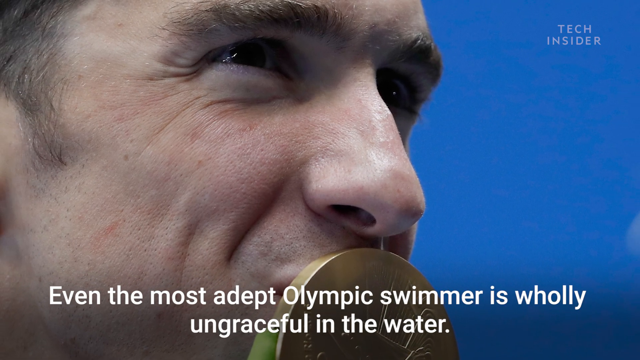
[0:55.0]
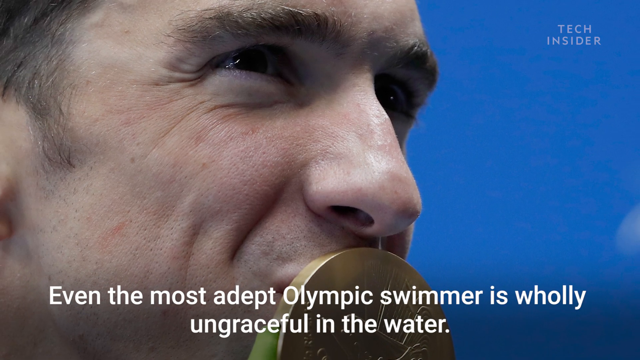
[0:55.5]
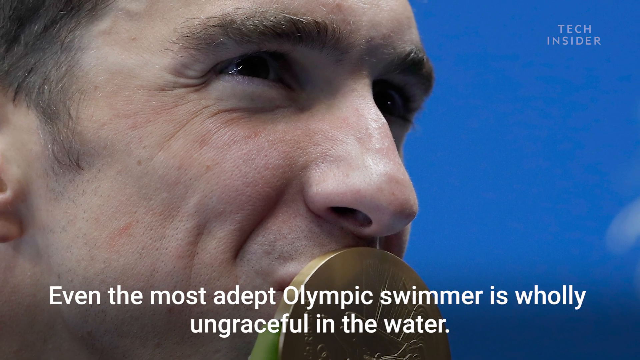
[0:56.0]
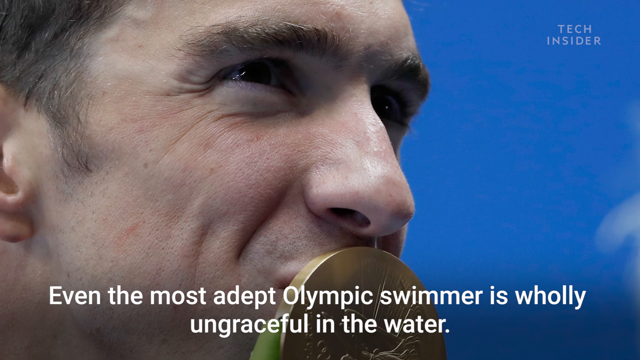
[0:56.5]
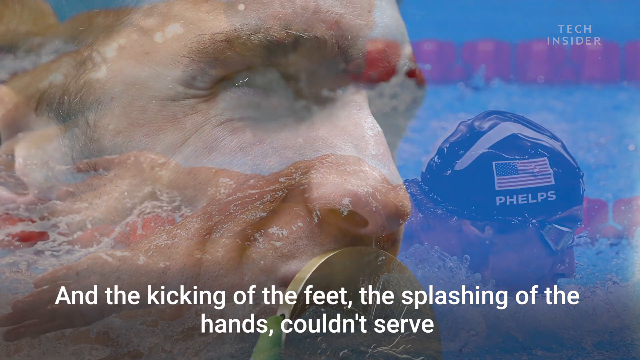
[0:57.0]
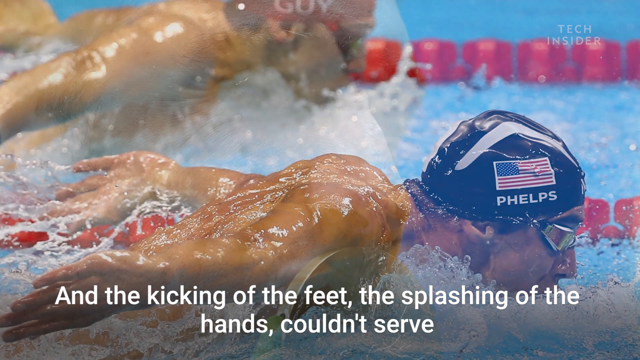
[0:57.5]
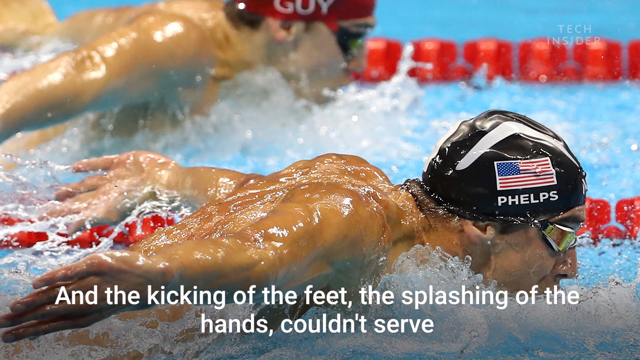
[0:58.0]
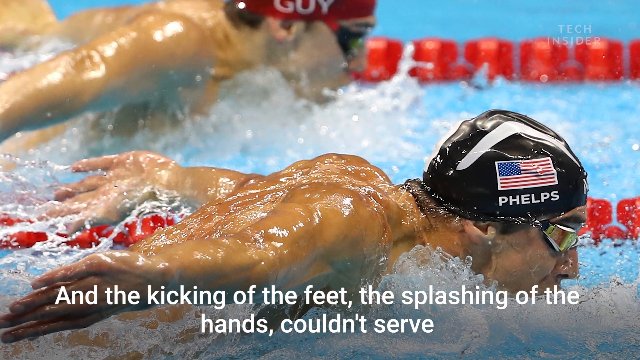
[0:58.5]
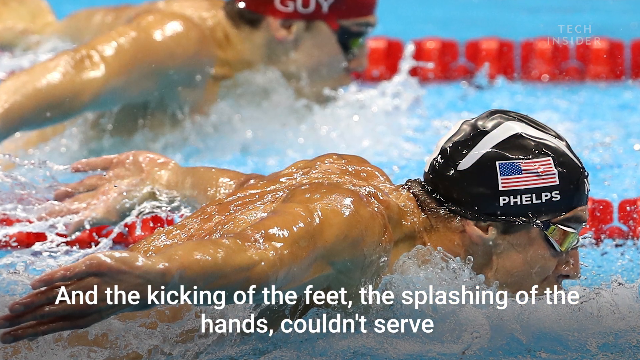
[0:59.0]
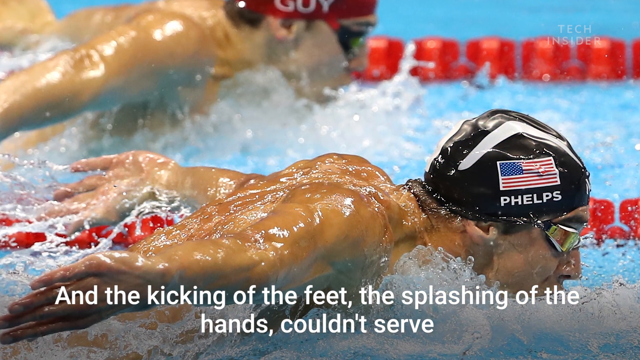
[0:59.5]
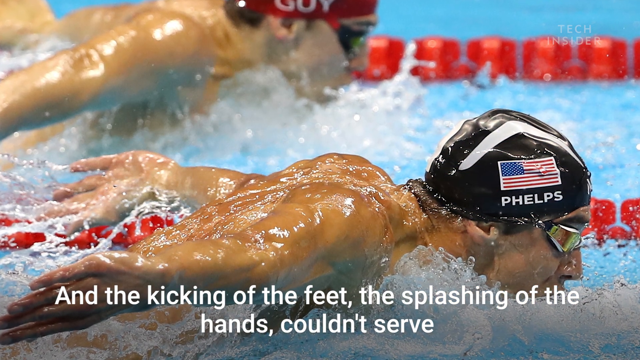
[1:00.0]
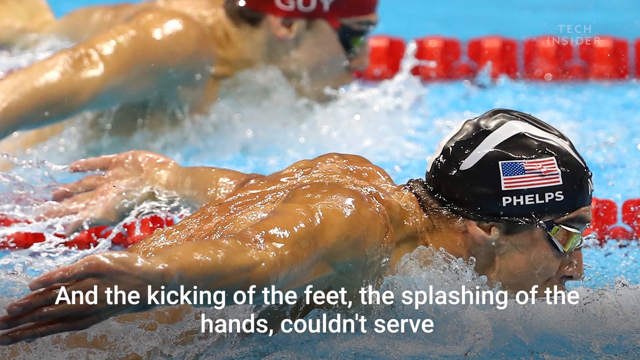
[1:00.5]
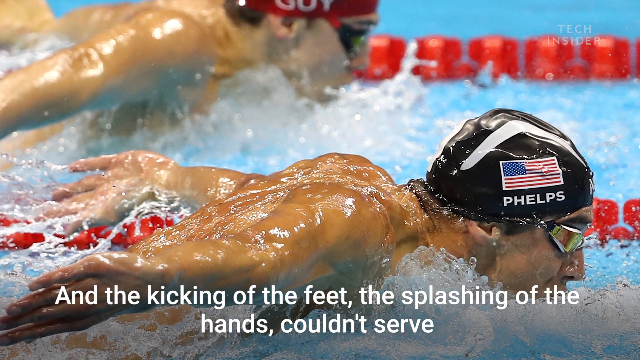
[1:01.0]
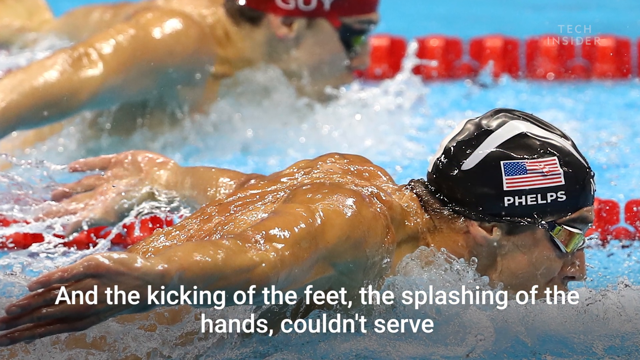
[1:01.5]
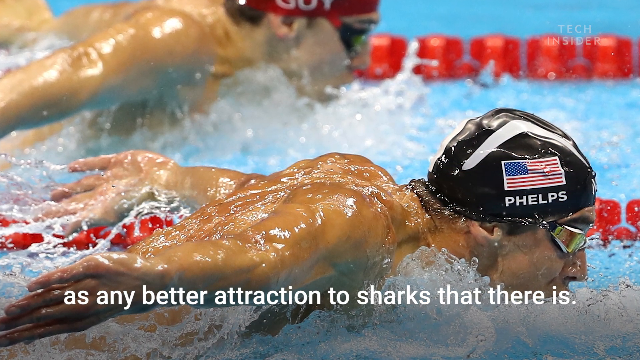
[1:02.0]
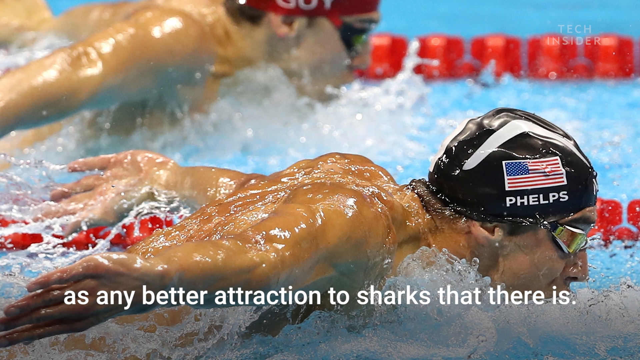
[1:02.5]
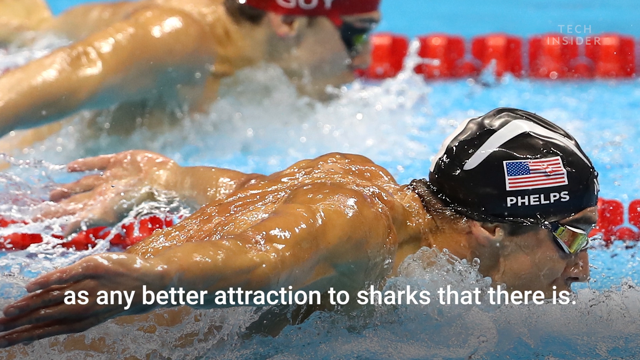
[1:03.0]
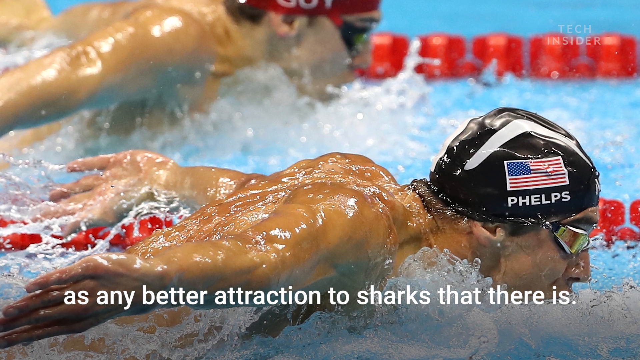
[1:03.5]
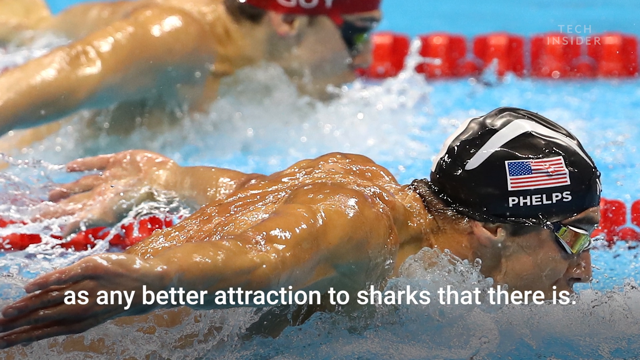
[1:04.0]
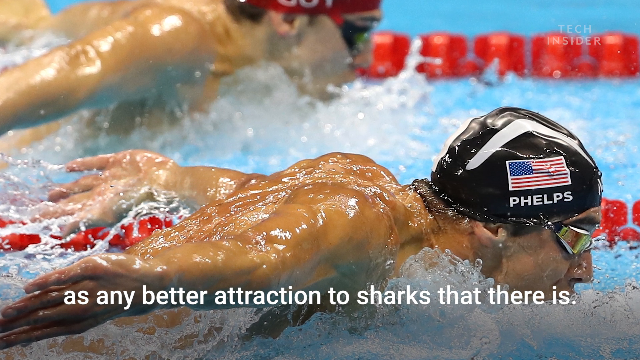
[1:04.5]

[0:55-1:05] Pierce Phelps is at a microphone, speaking. Clips show Michael Phelps in the water racing another swimmer. Text is typed out on the screen about kicking, reading "even the most adept Olympic swimmer is wholly ungraceful in the water", followed by text about the kicking of the feet and the splashing of the hands serving as an attraction to sharks.